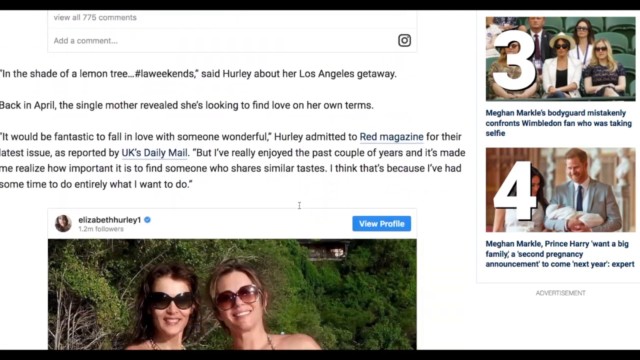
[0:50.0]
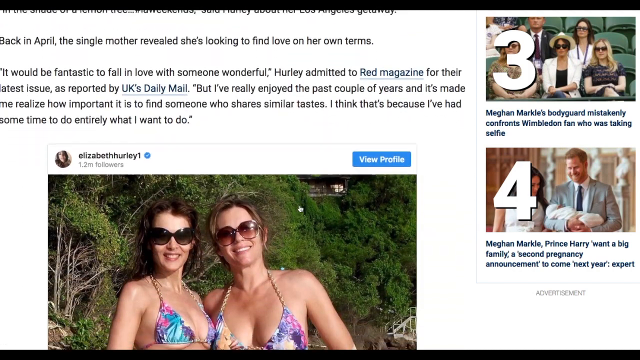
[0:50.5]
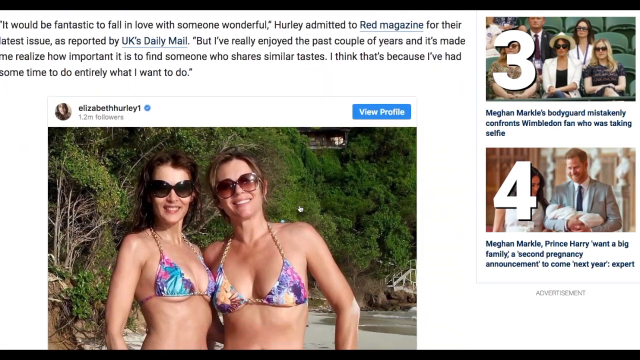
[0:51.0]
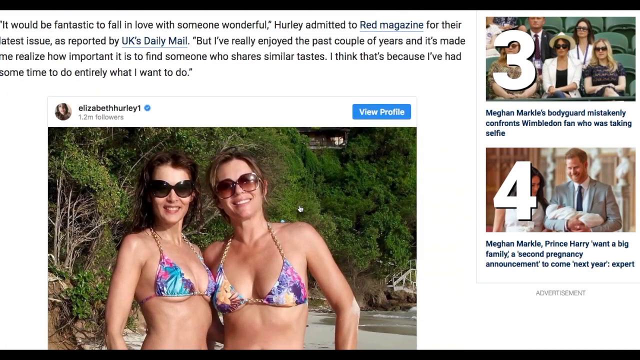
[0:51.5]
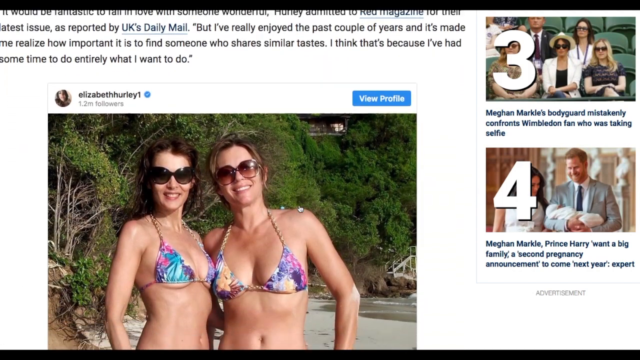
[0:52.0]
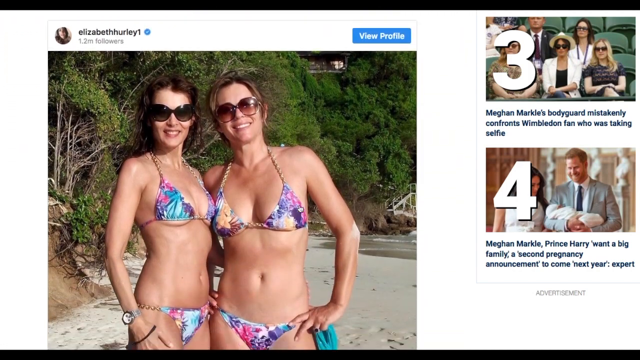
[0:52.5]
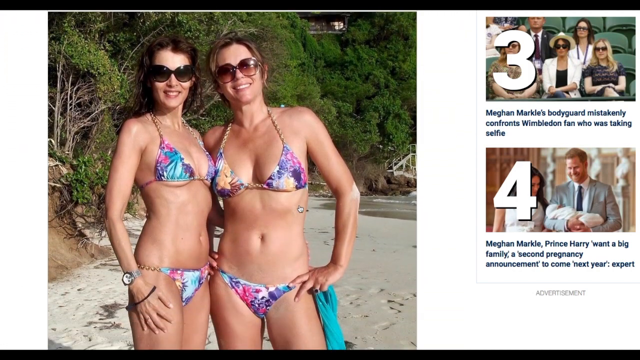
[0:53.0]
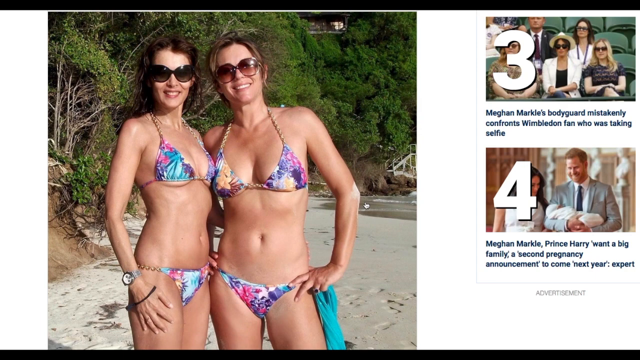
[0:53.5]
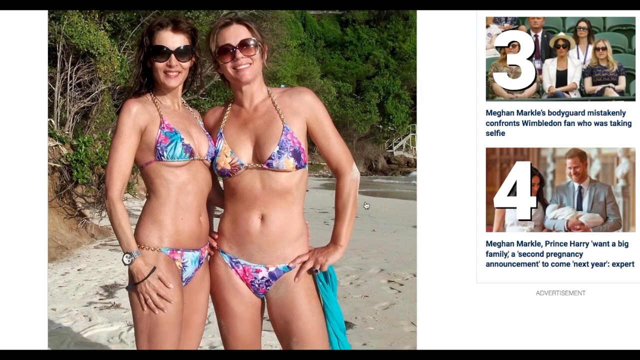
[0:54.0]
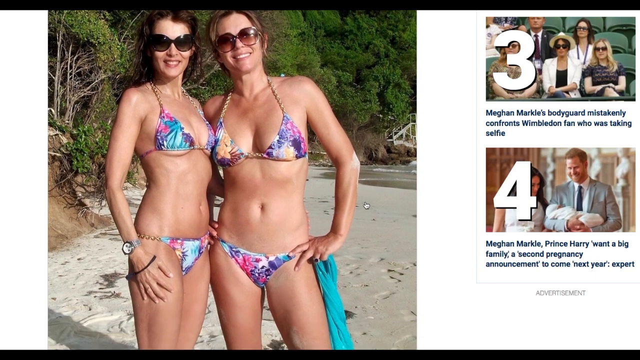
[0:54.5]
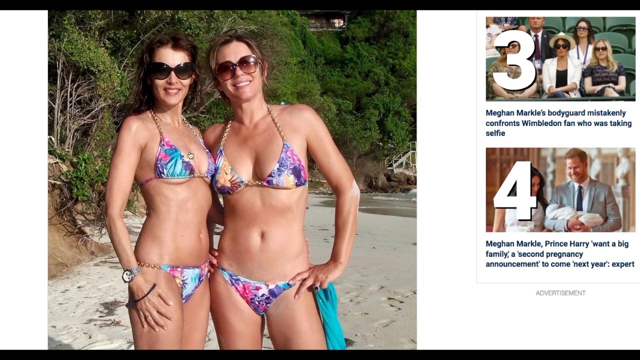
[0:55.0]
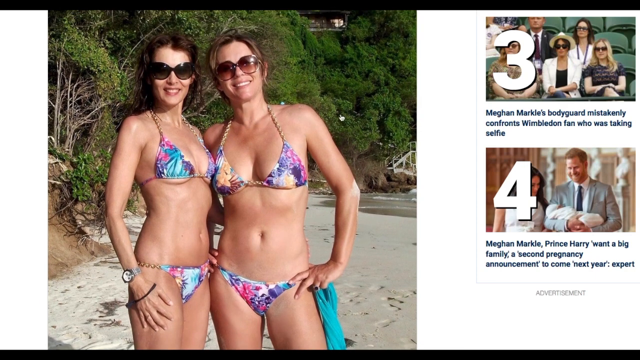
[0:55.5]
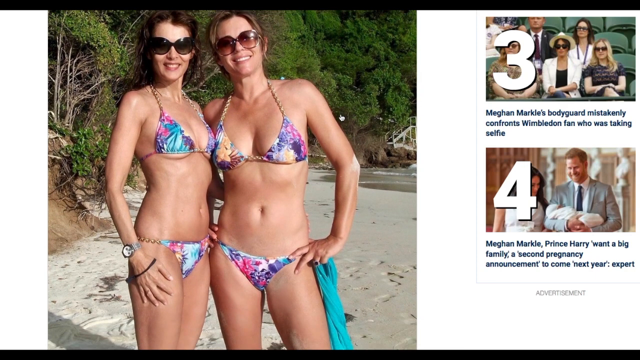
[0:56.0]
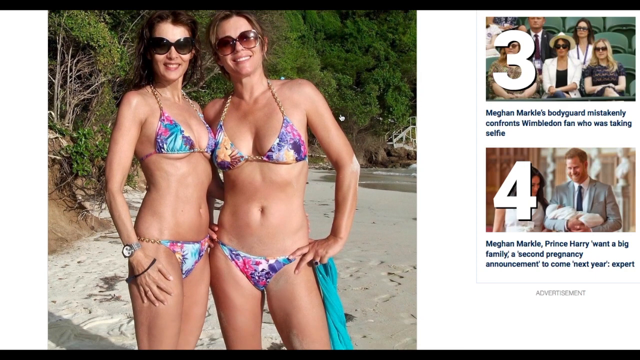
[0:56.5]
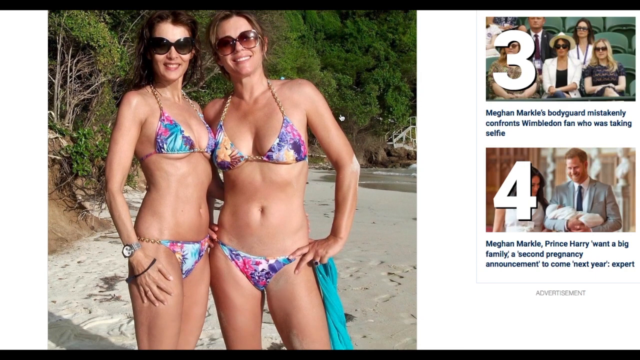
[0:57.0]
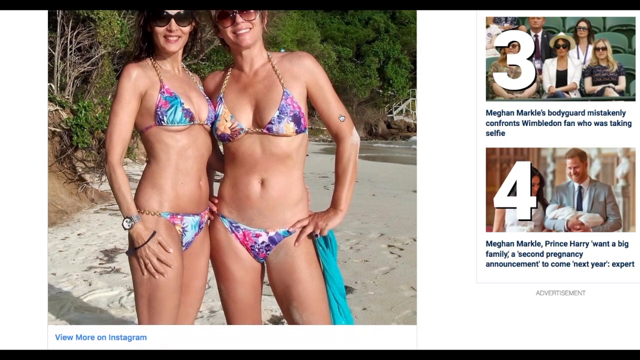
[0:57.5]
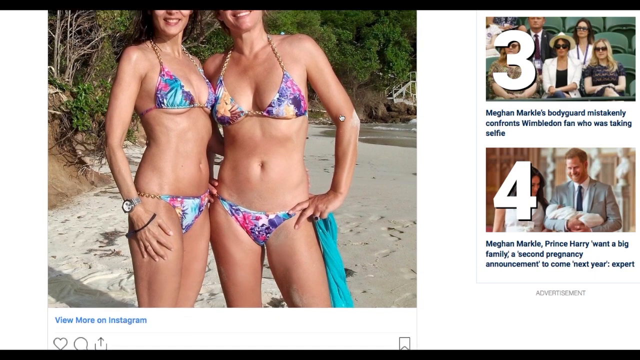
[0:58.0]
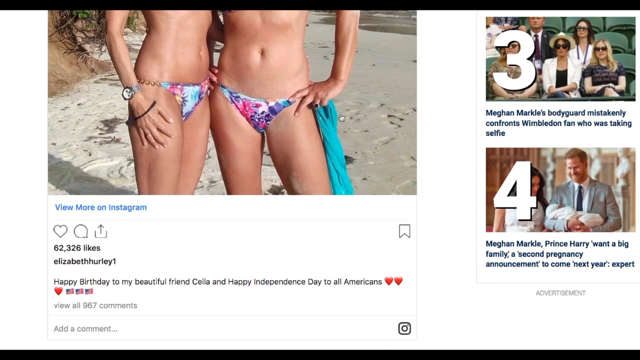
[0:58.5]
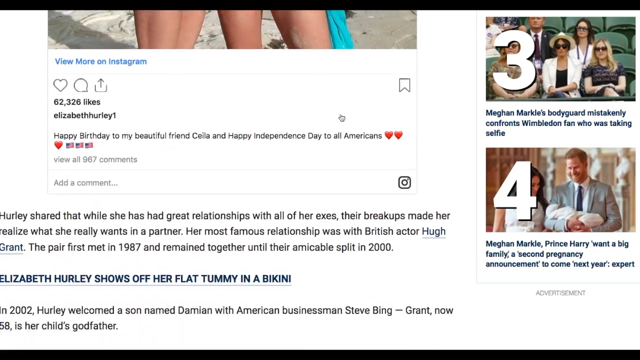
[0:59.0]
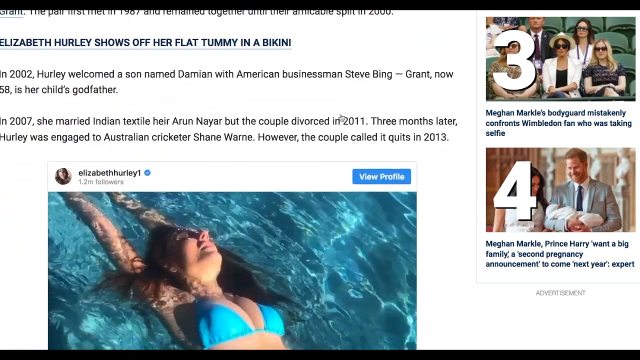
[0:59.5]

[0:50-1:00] An article in black text appears on a white background. On the right side are two pictures with white numbers: the first, marked three, shows people sitting on green chairs behind the number, and the one below, marked four, shows Meghan Markle with Prince Harry to her right holding a child. Below the article is another picture that seems to be from a Twitter post; the post is from Elizabeth Hurley. It shows two women wearing sunglasses and bikinis with purple, blue, and orange patterns, with a sandy beach, some water, and trees behind them. The user scrolls down to more of the article in black text, then to another picture of what looks like a woman in a blue bikini swimming in a swimming pool.